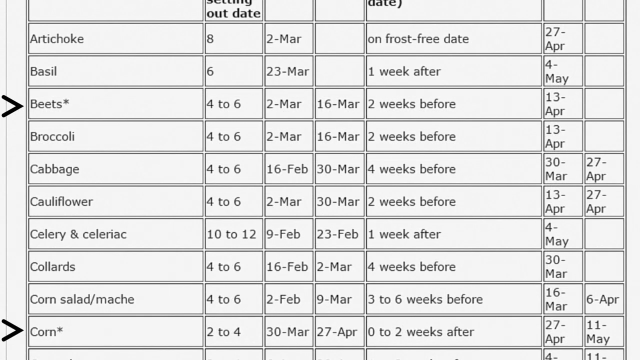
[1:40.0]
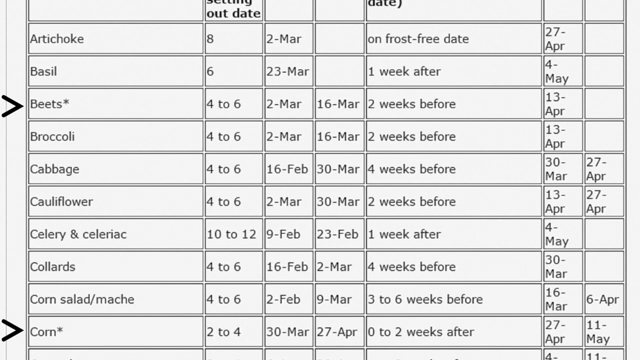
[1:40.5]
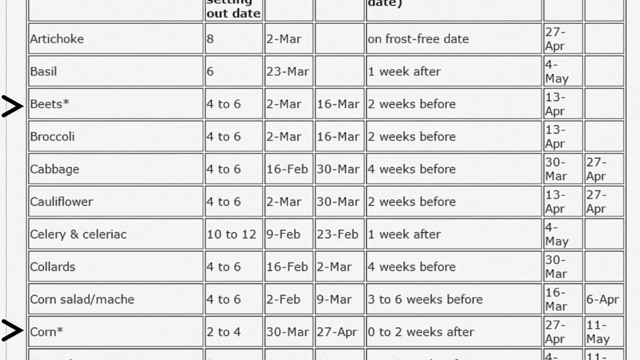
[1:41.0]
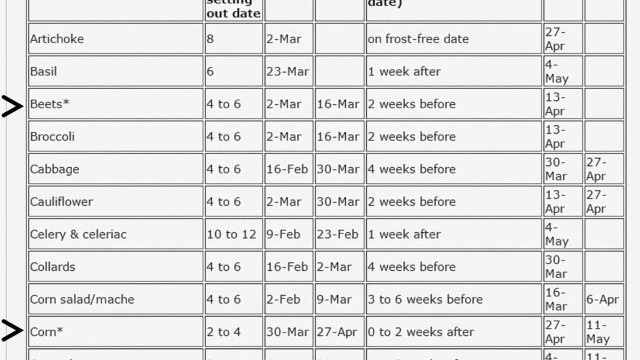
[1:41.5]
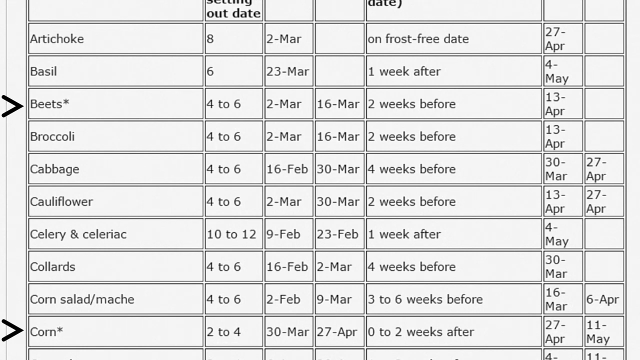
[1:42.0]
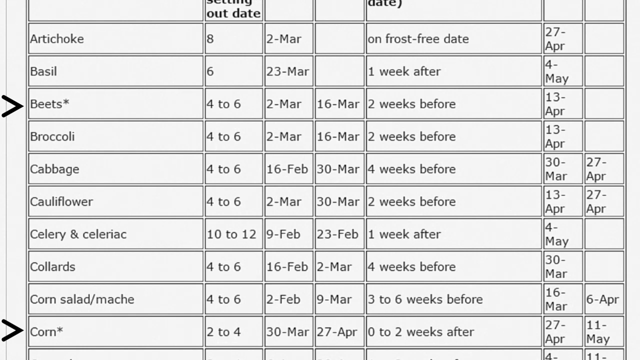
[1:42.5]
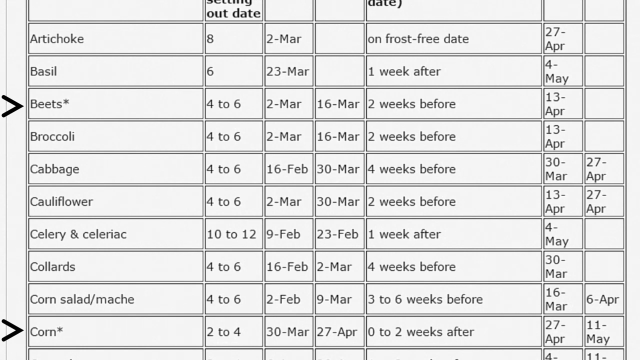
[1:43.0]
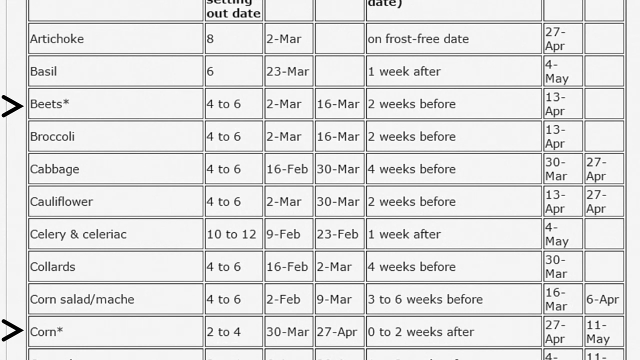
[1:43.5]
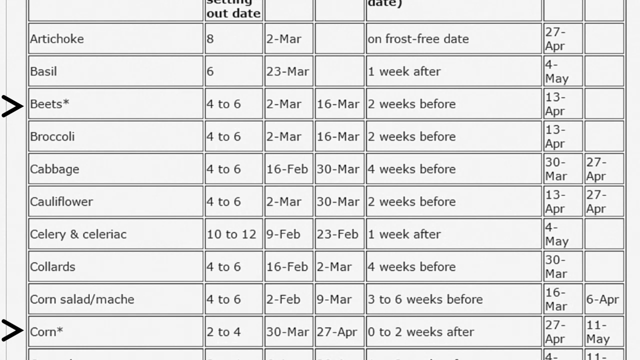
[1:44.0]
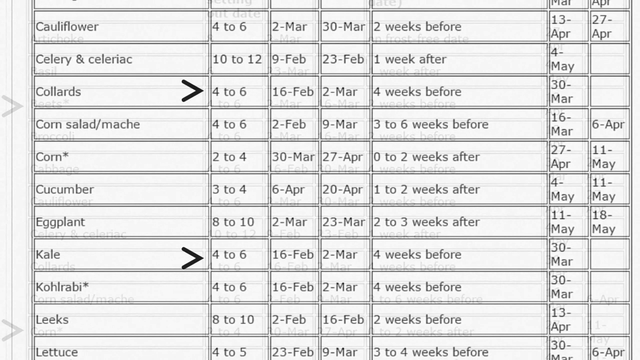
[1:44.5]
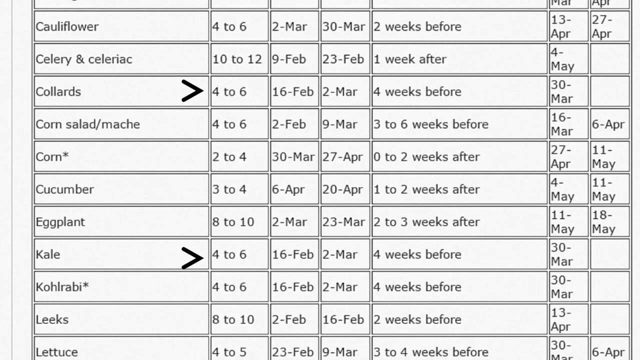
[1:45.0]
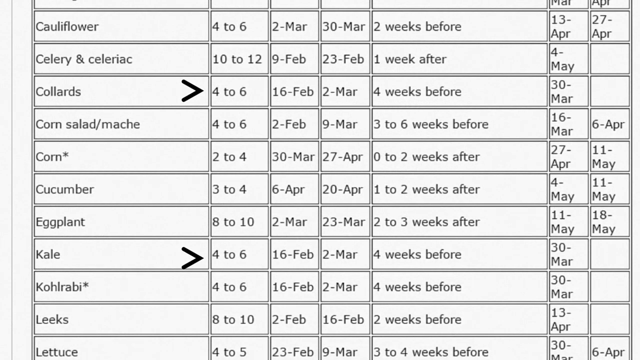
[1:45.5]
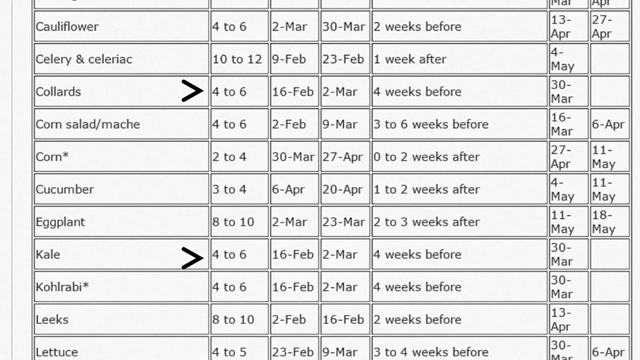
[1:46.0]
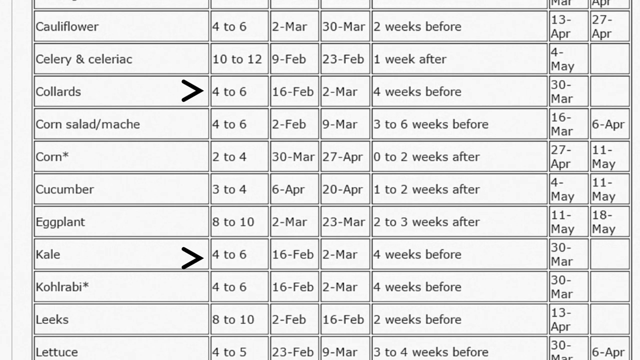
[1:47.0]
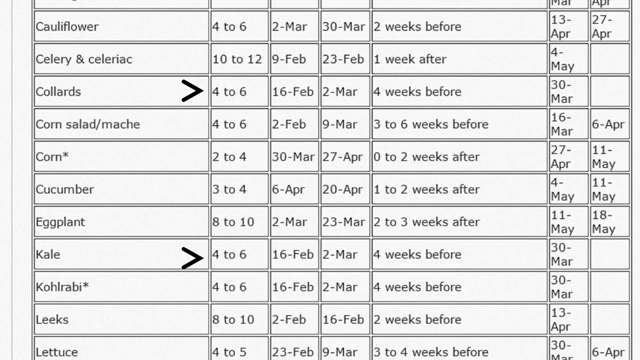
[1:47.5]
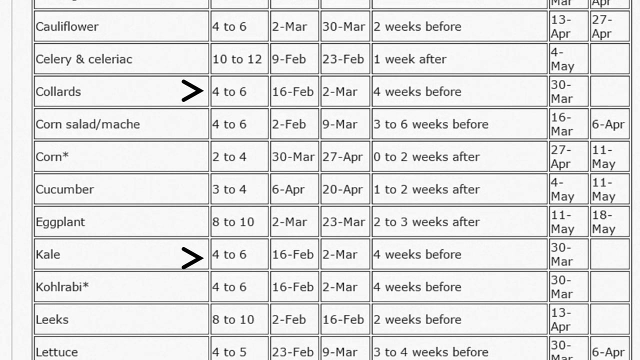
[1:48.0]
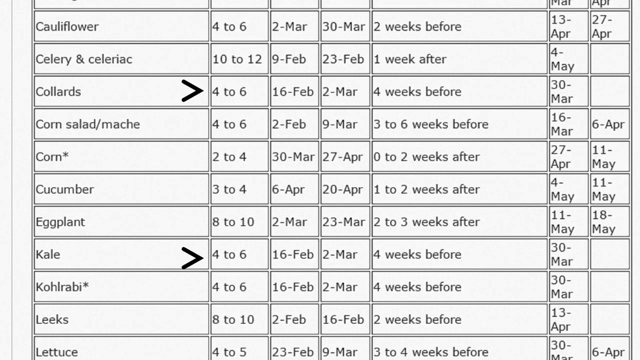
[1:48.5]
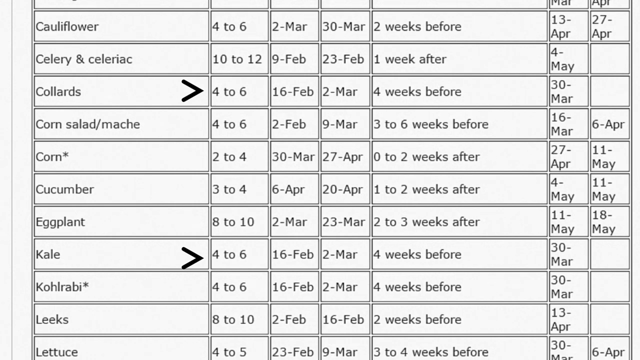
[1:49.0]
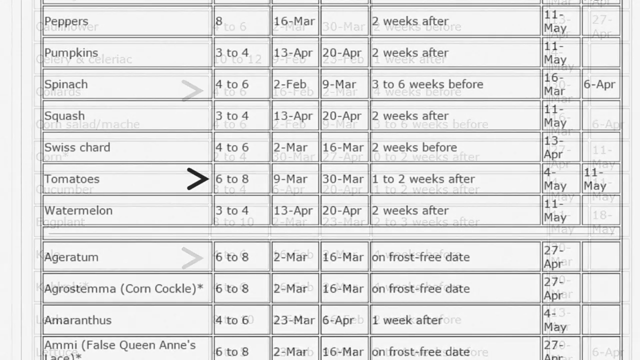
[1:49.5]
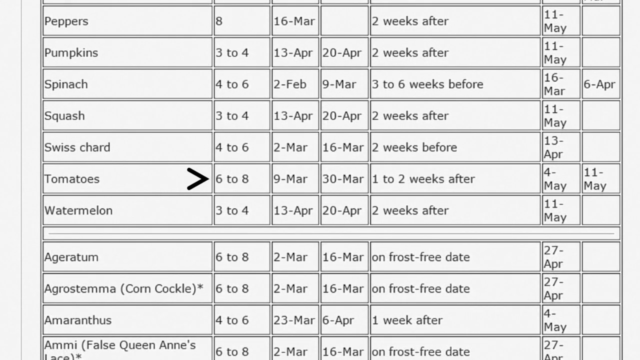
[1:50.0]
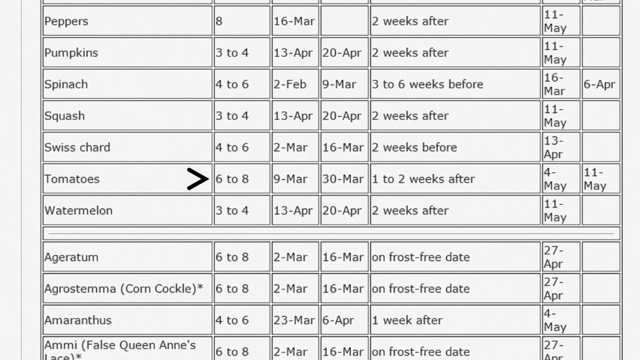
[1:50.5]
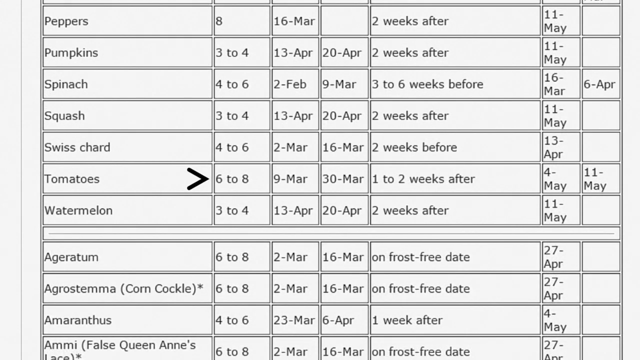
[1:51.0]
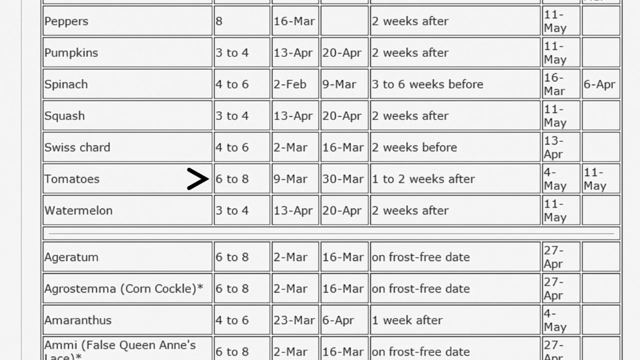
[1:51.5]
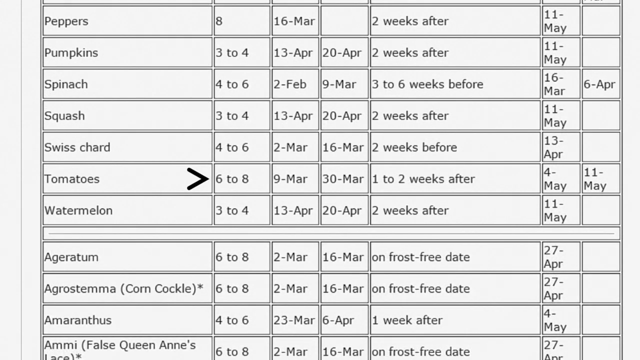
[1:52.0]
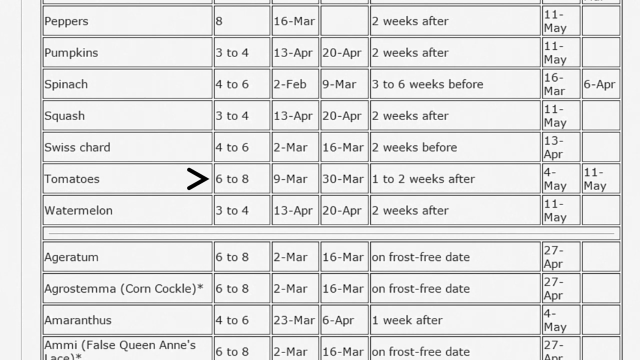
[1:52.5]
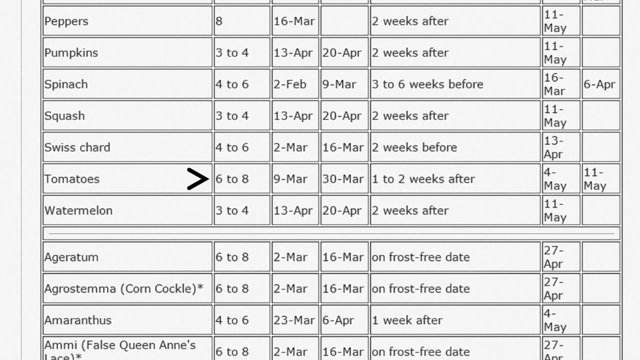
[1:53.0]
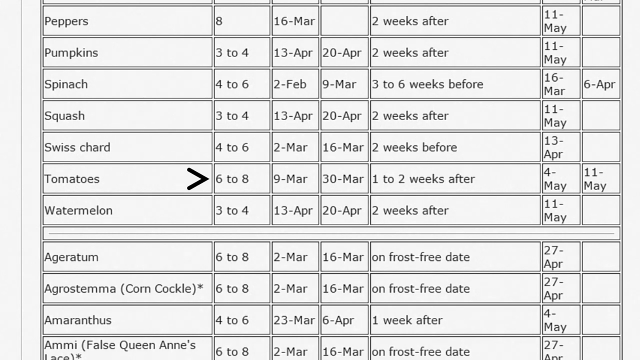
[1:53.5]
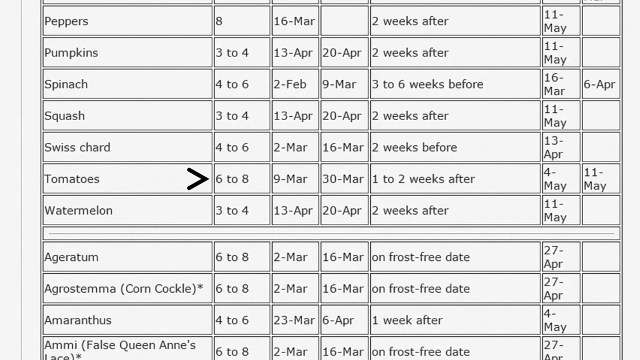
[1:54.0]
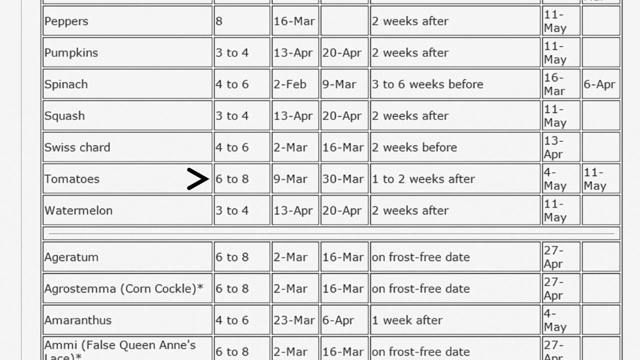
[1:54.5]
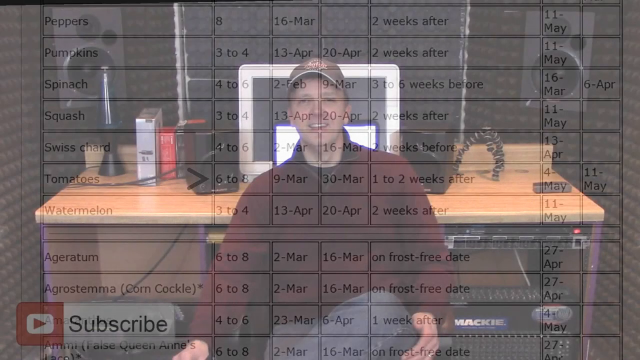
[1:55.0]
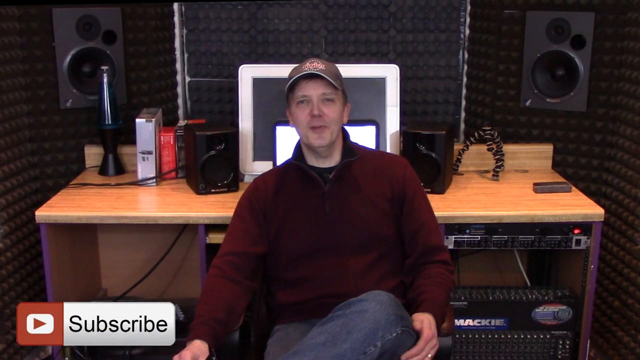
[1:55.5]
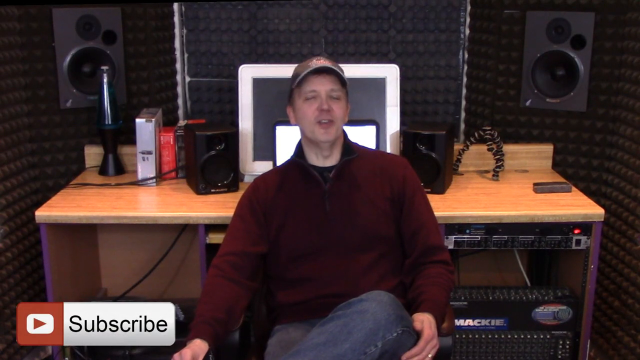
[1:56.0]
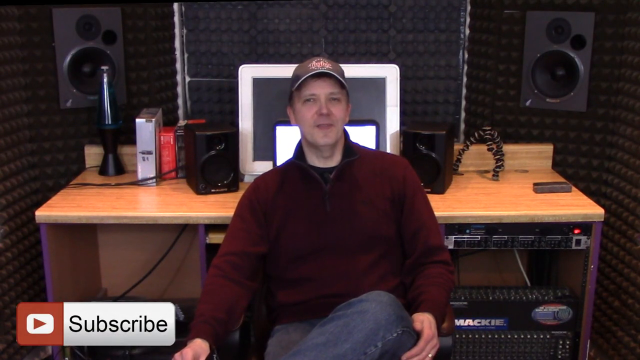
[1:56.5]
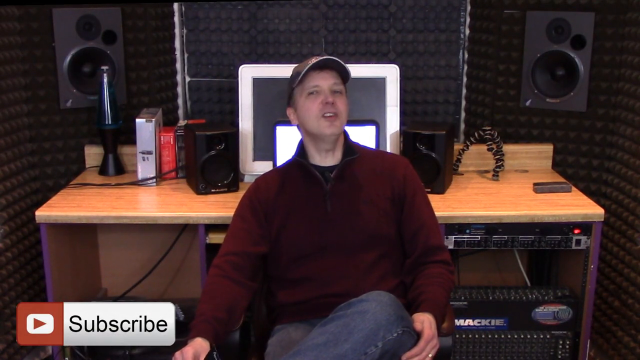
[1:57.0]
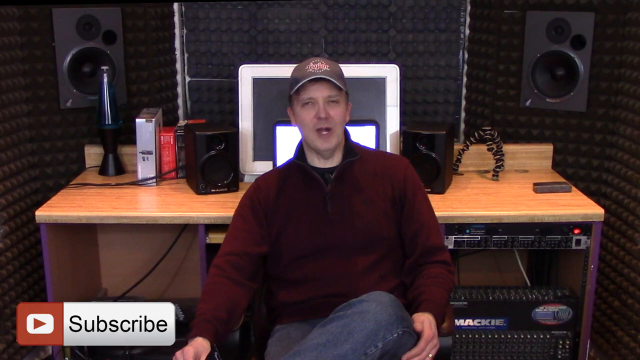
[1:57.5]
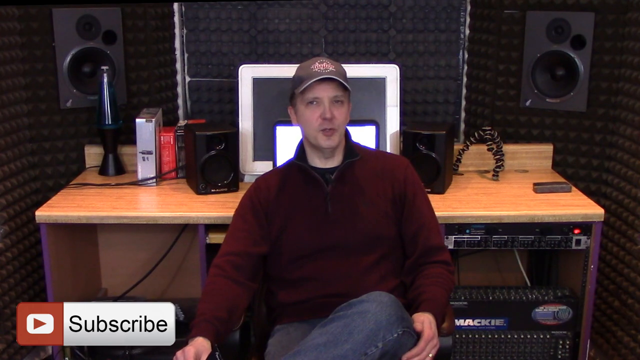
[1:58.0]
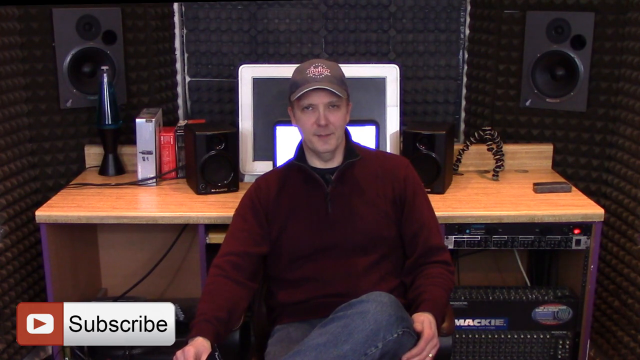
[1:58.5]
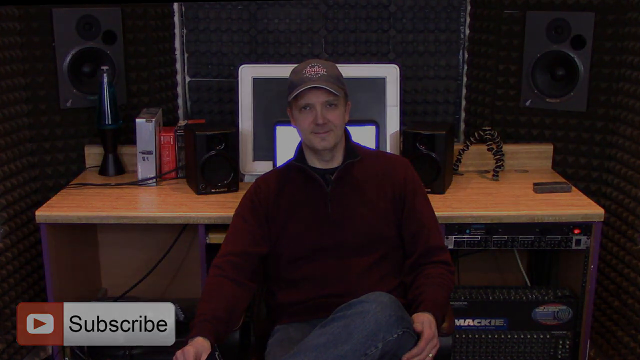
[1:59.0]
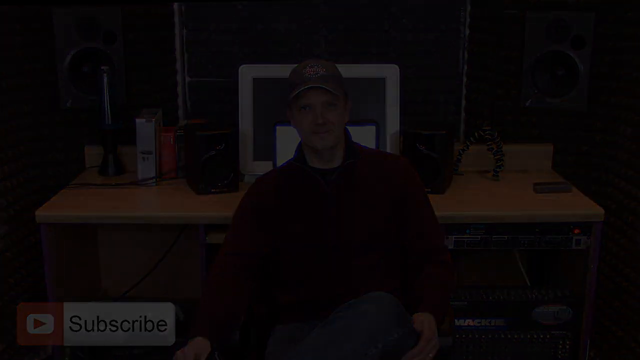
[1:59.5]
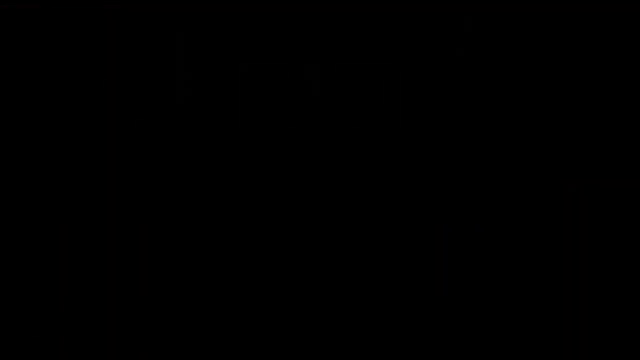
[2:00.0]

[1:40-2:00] The table continues to list crops that go in after the main date: basil a week afterwards and celery a week afterwards. Others can go in before: cauliflower two weeks before, beetroot two weeks before, corn salad three to six weeks before, and kale and kohlrabi four weeks before. Cucumber goes in one to two weeks afterwards, and eggplant or aubergine perhaps latest of all, two to three weeks afterwards. Lettuce can go in fairly early, and spinach early as well, three to six weeks before. Peppers go in two weeks after, as does watermelon. Finally, the video returns to Patrick Dolan in his studio, who wraps up and invites viewers to subscribe.